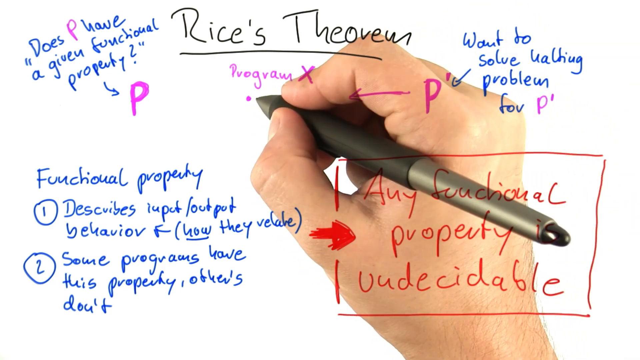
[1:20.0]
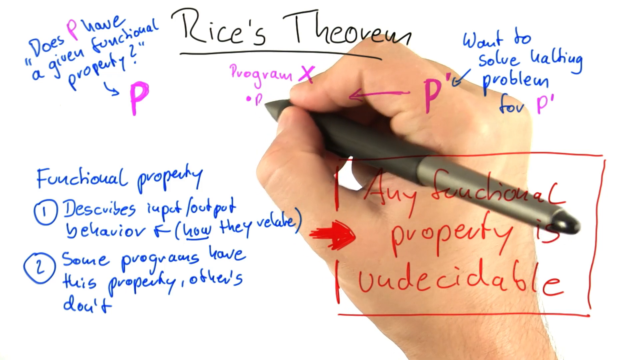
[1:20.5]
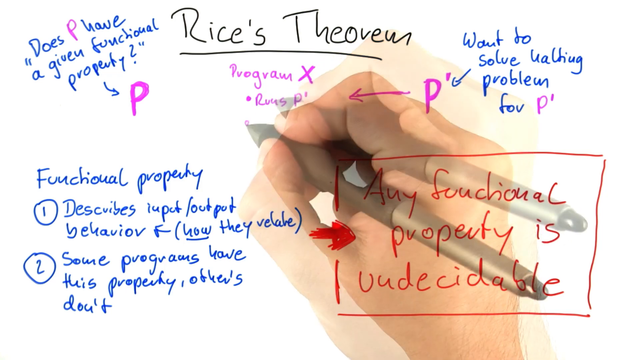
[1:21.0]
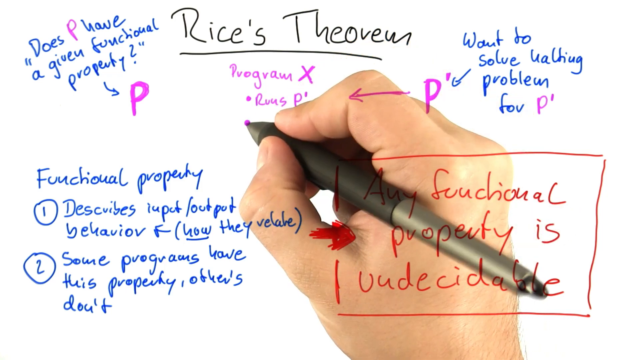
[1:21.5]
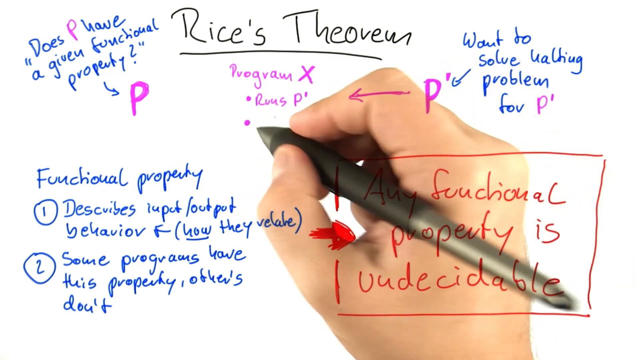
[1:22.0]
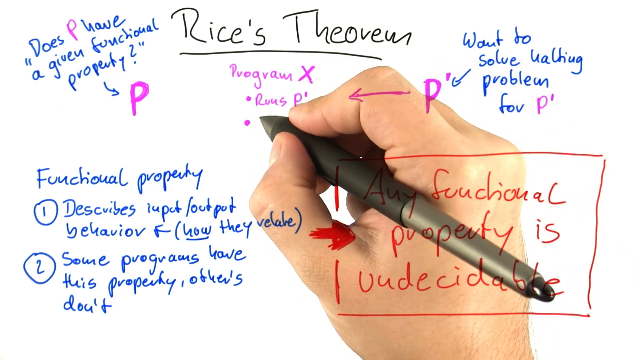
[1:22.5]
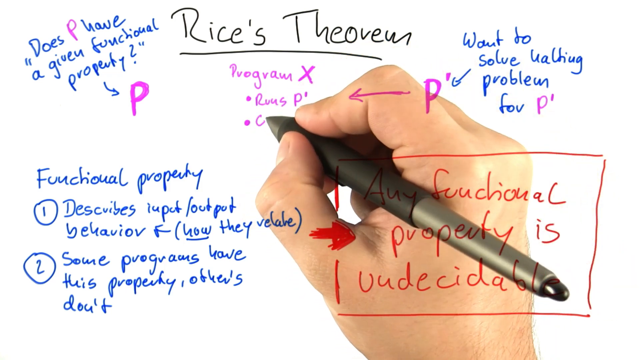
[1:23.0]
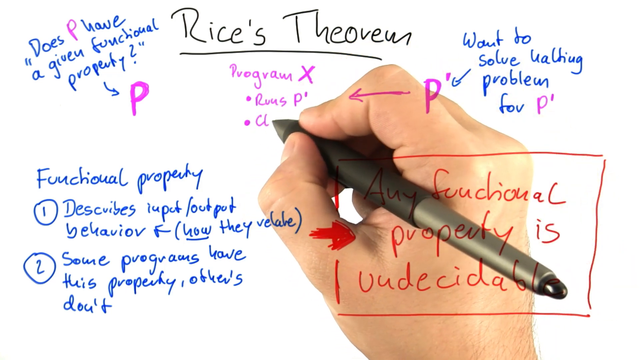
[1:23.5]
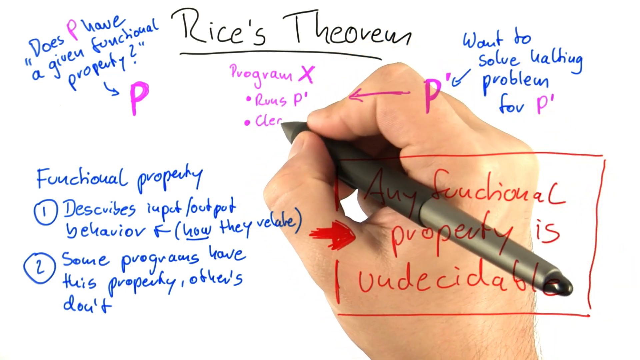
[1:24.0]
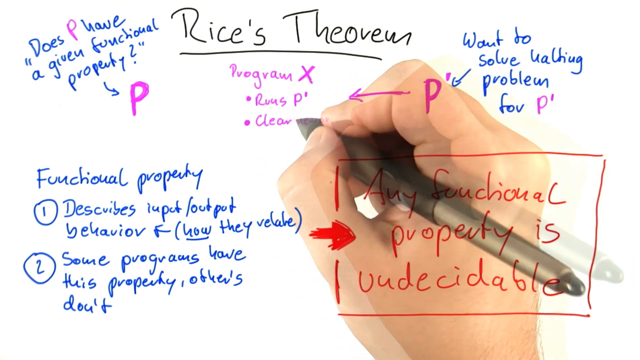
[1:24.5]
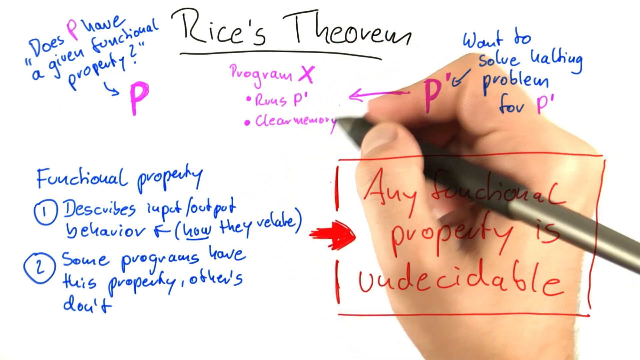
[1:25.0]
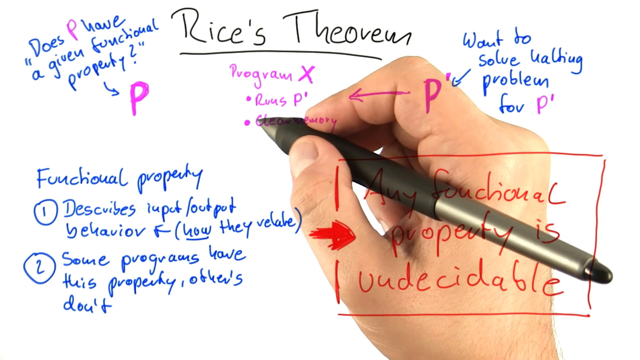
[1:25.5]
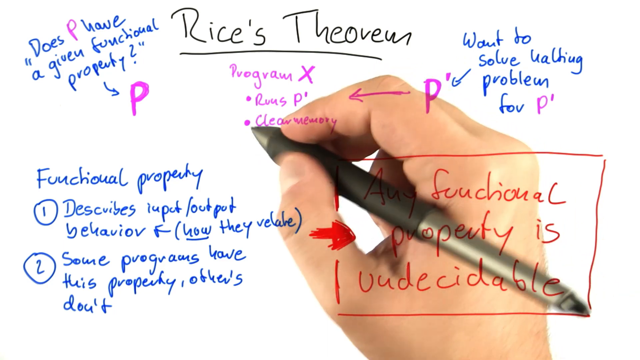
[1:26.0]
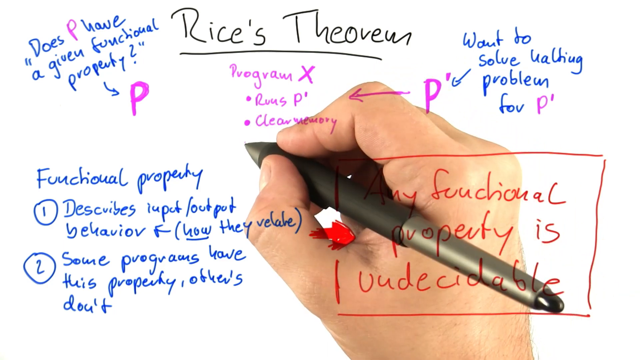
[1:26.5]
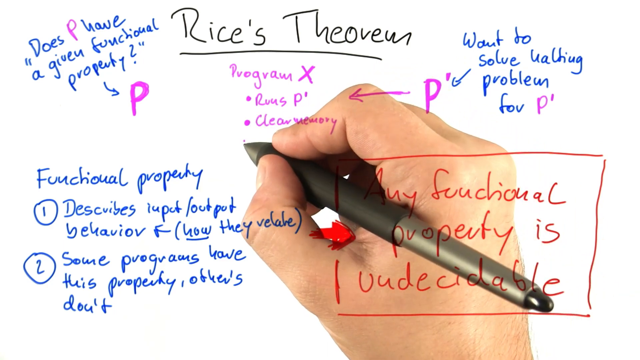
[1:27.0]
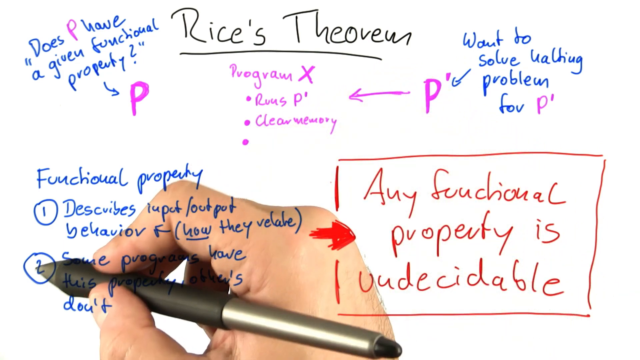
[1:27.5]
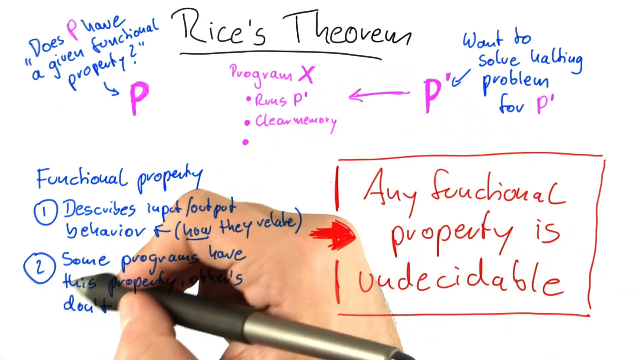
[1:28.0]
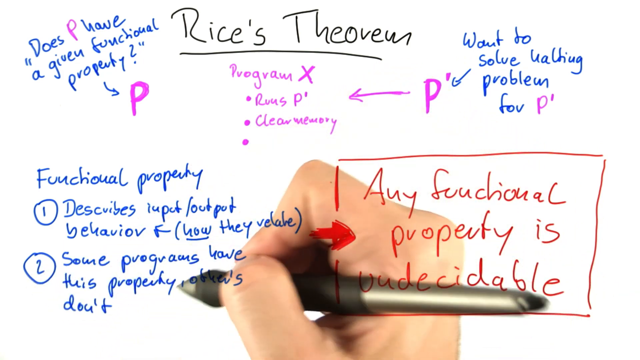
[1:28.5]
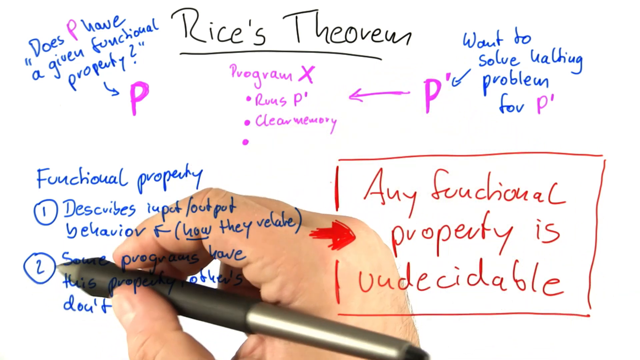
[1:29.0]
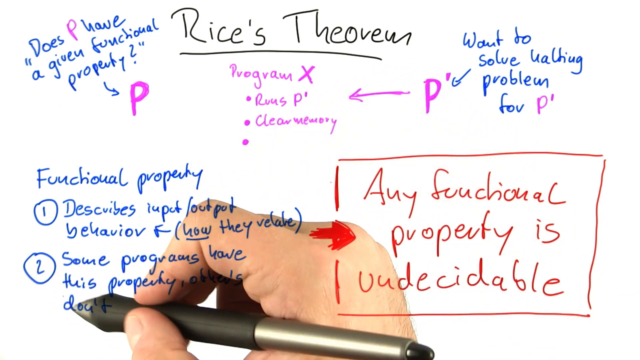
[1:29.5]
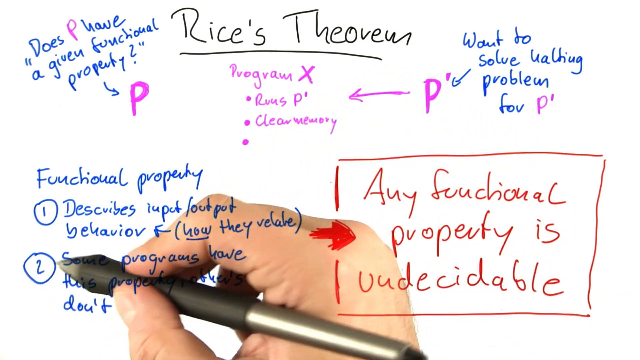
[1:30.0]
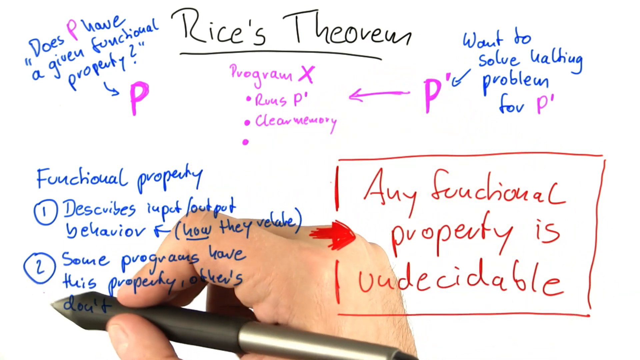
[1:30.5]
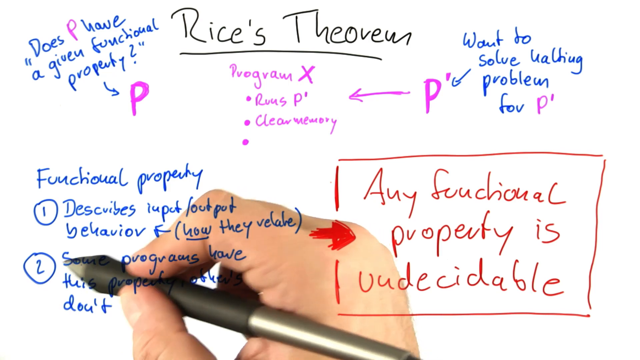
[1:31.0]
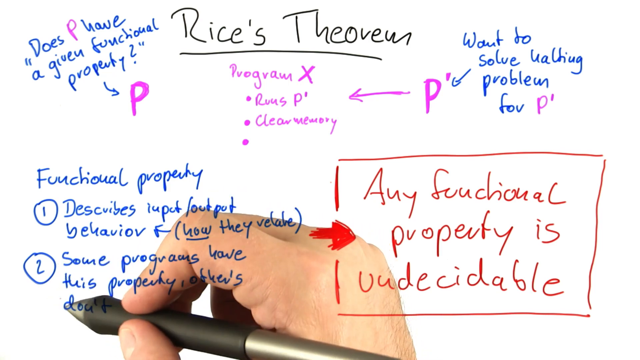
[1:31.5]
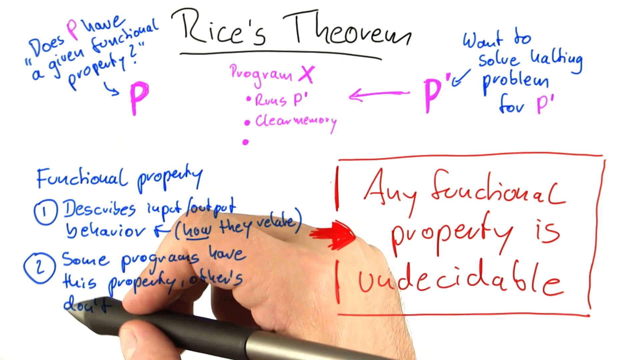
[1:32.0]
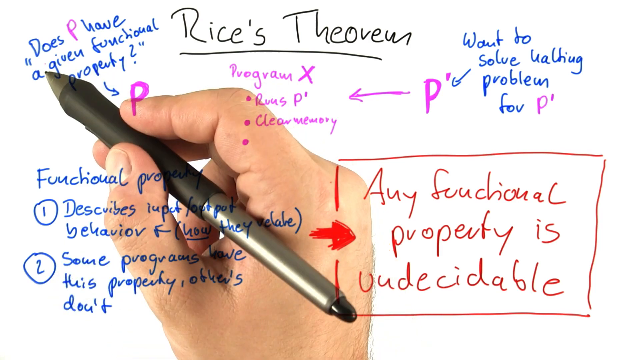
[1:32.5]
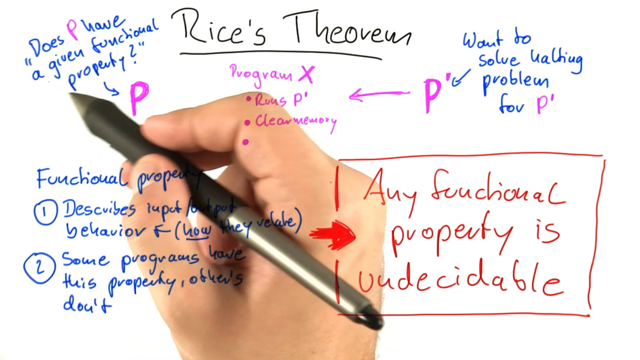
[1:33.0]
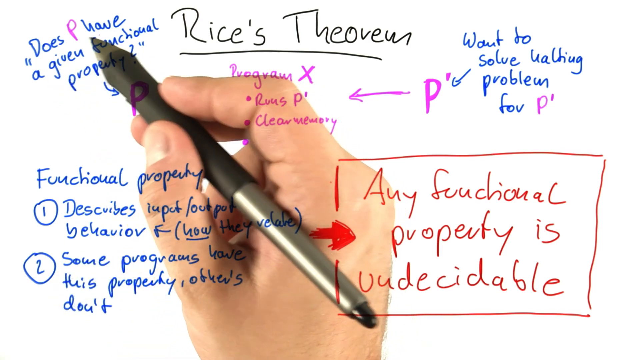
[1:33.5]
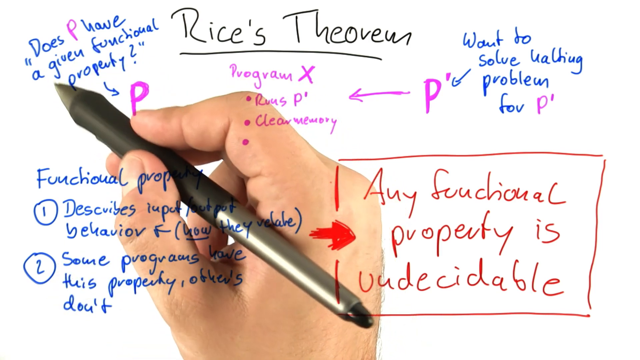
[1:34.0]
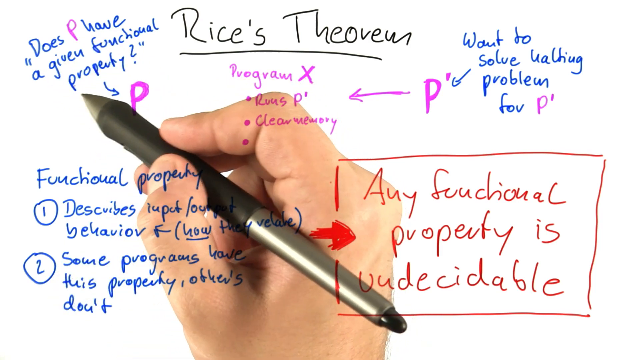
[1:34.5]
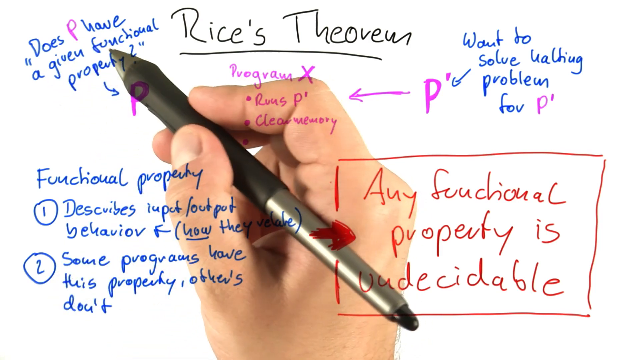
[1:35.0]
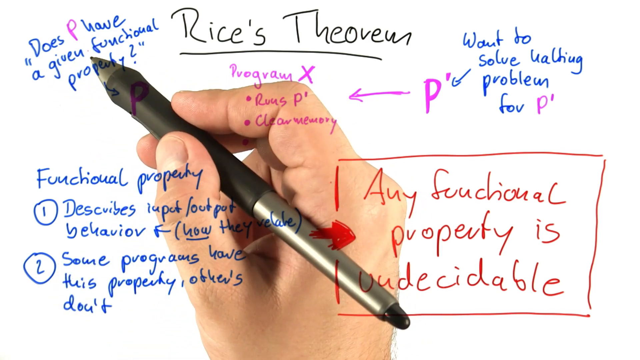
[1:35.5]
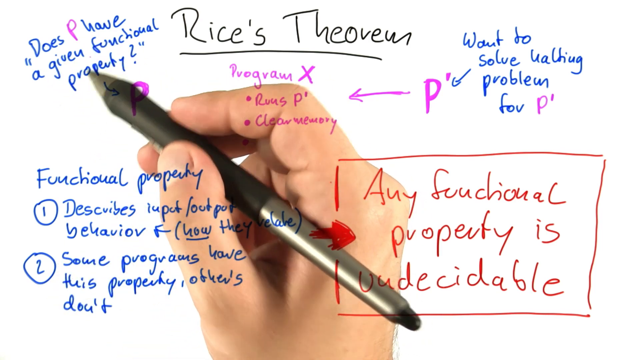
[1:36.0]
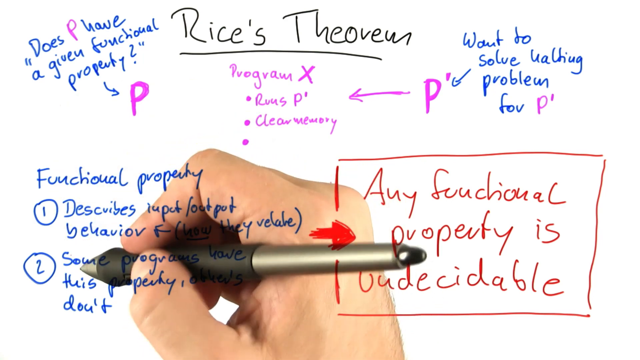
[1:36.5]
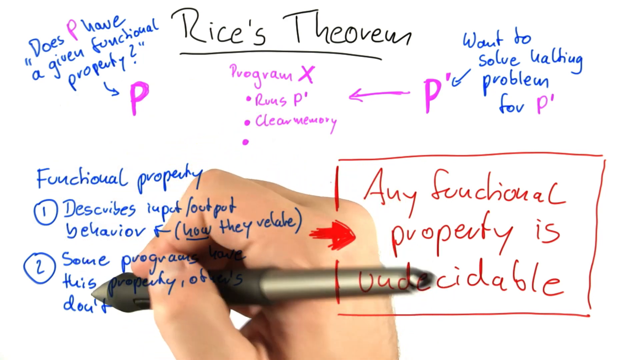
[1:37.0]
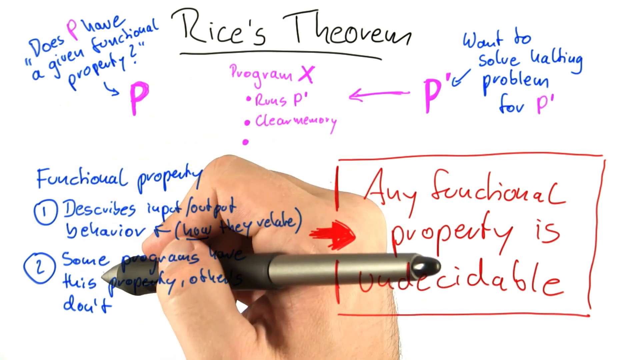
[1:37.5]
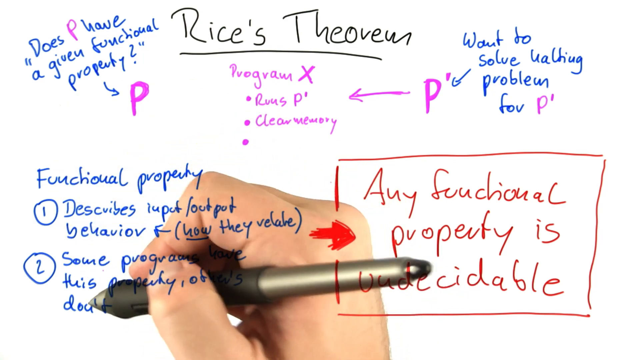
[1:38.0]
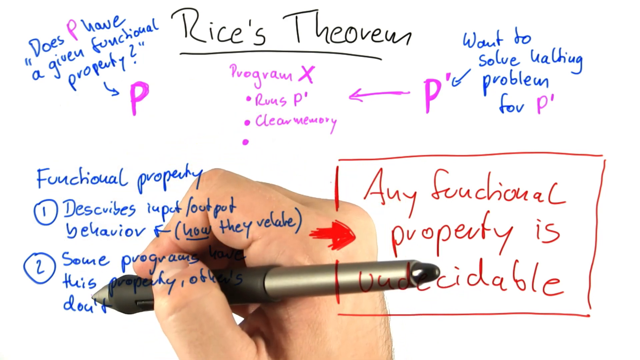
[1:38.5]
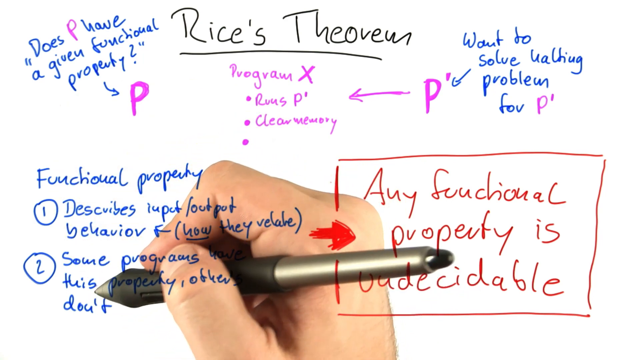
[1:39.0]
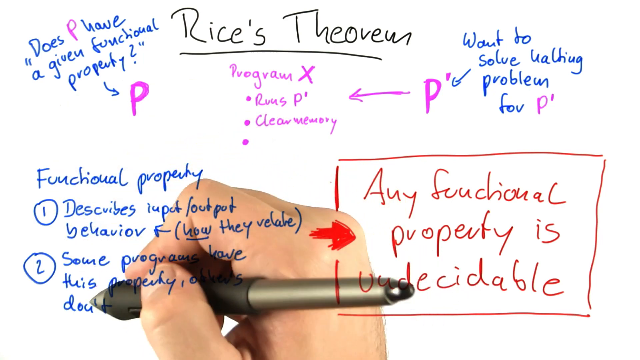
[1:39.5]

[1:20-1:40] Black text at the top of a white background says "Rice's Theorem." Blue and purple text in quotation marks says "does P have a given functional property," with a blue arrow pointing to a purple P. Blue text at the bottom says "functional property 1 describes input output behavior how they relate 2 some programs have this property others don't." A red box has a red arrow pointing to red text that says "any functional property undecidable." Purple text says "program X," and a person's hand has drawn a small purple circle. Blue text says "want to solve waiting problem for P," with a blue arrow pointing to a purple P that has a purple arrow. He writes "Russ P," makes another small purple circle and writes "clear memory," then makes another purple circle while pointing his pen at the blue text in the bottom left. He kind of just moves his pen in a circle, then does the same at the top left corner.